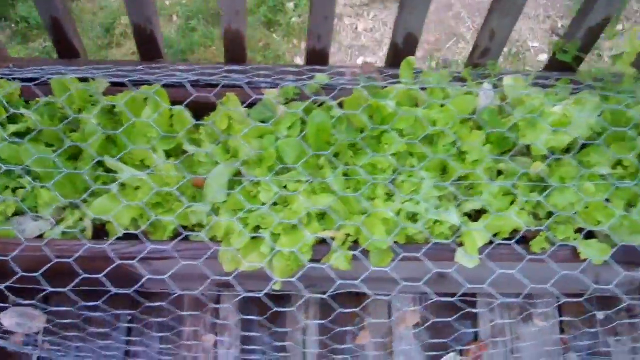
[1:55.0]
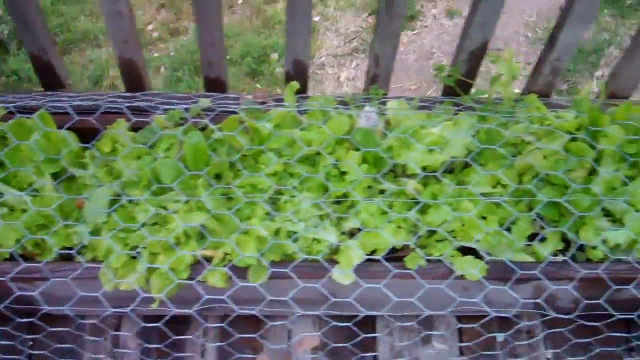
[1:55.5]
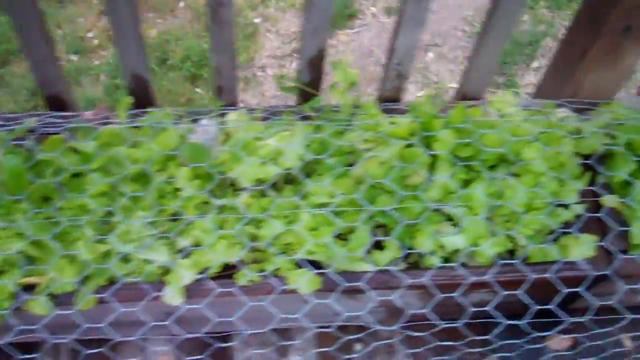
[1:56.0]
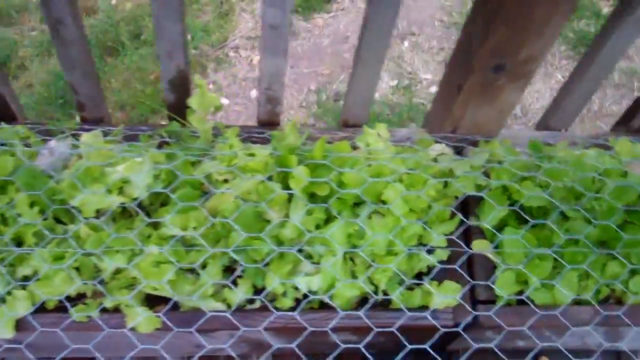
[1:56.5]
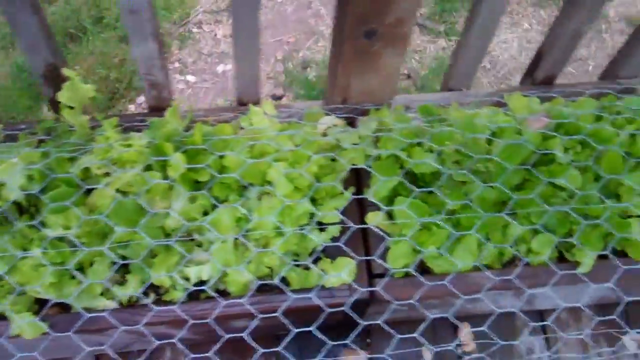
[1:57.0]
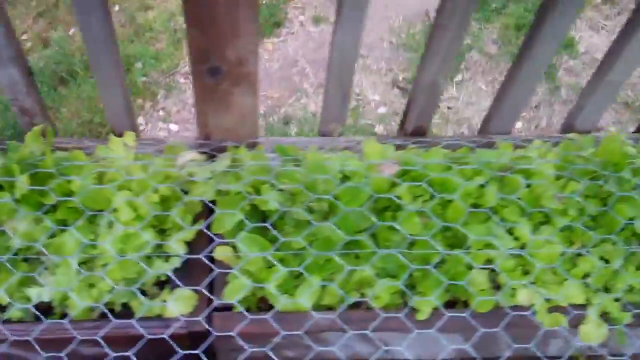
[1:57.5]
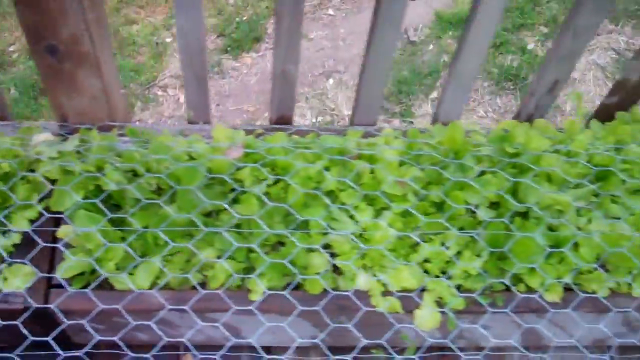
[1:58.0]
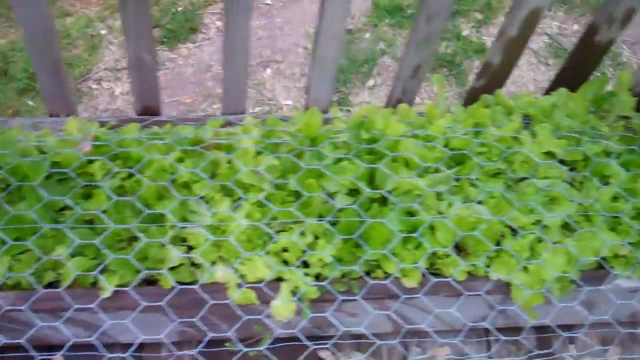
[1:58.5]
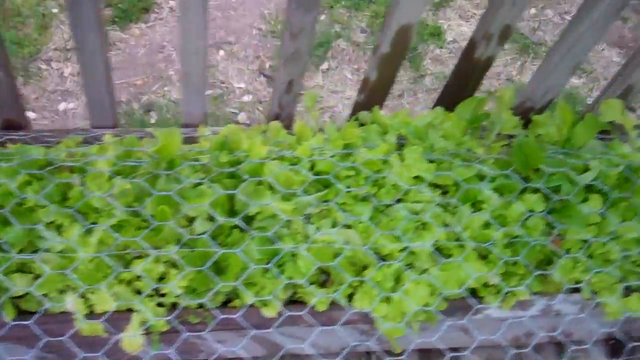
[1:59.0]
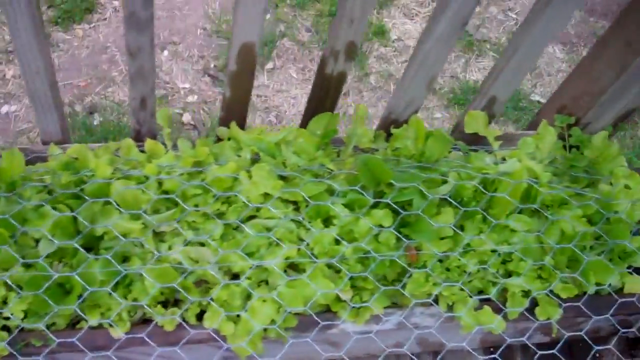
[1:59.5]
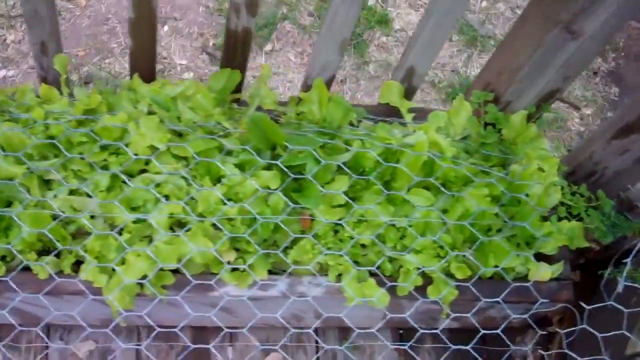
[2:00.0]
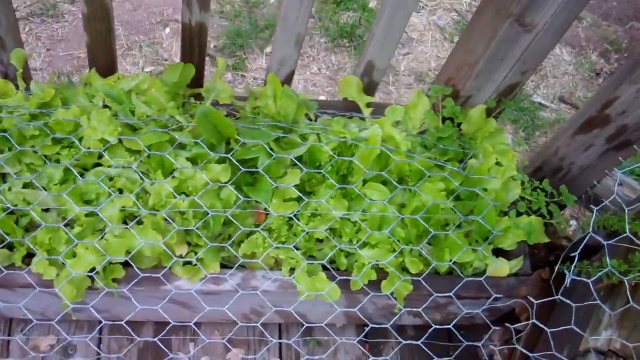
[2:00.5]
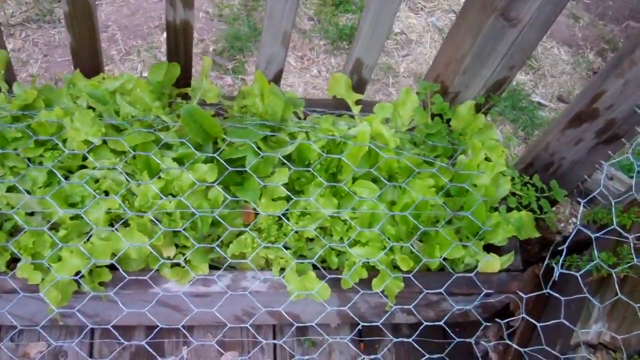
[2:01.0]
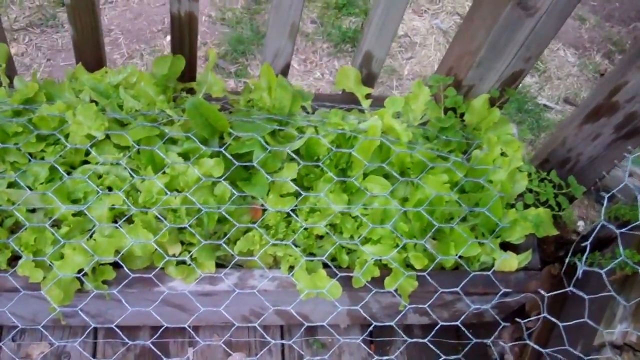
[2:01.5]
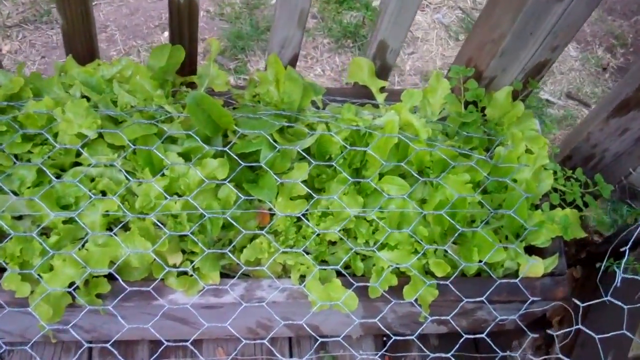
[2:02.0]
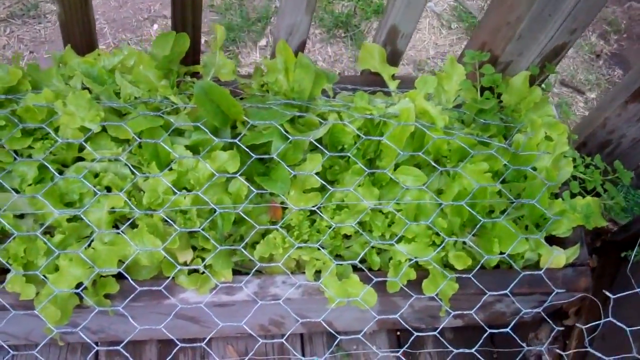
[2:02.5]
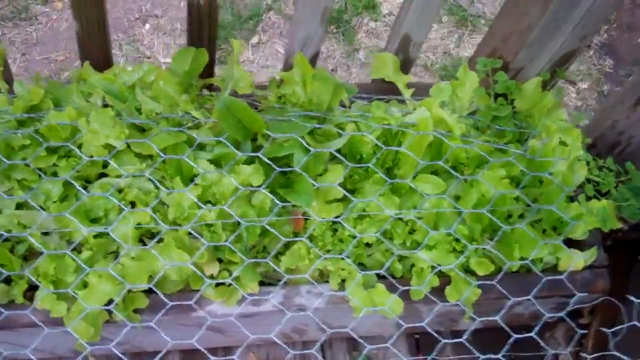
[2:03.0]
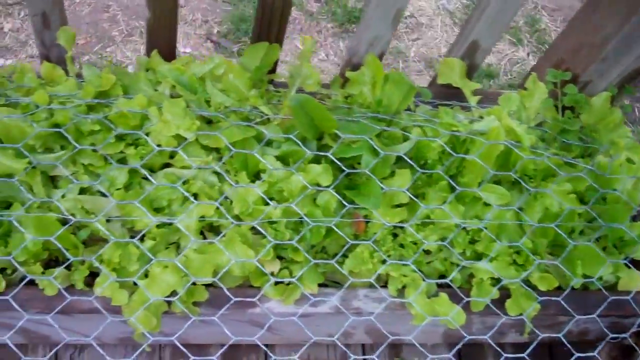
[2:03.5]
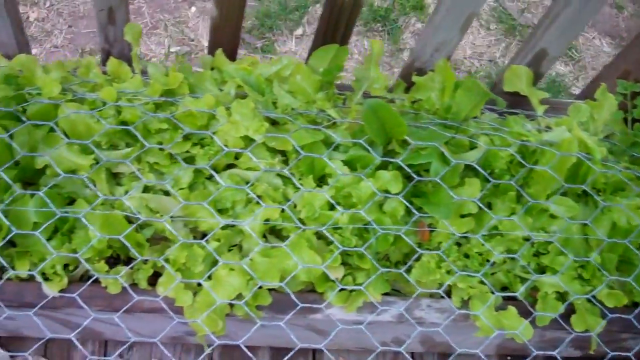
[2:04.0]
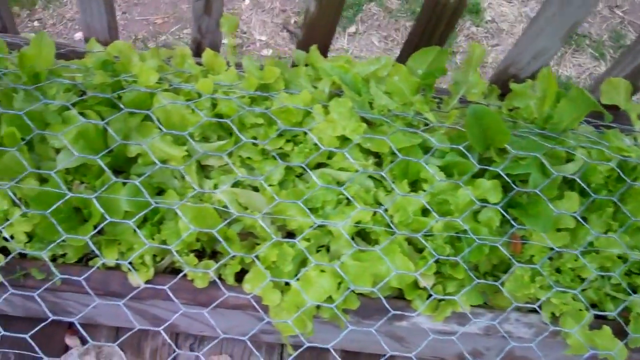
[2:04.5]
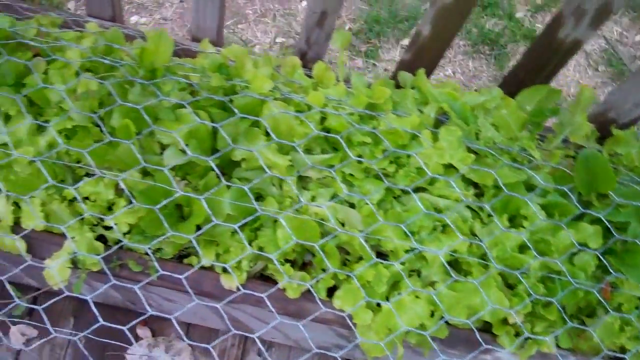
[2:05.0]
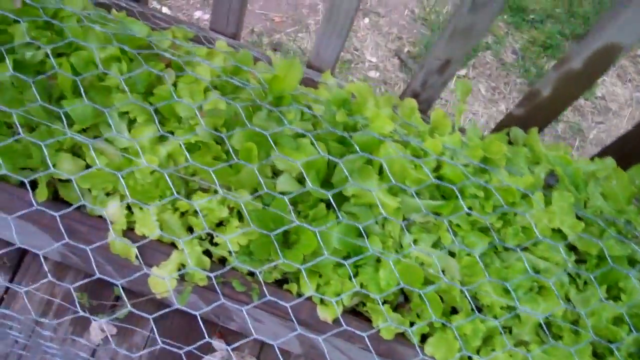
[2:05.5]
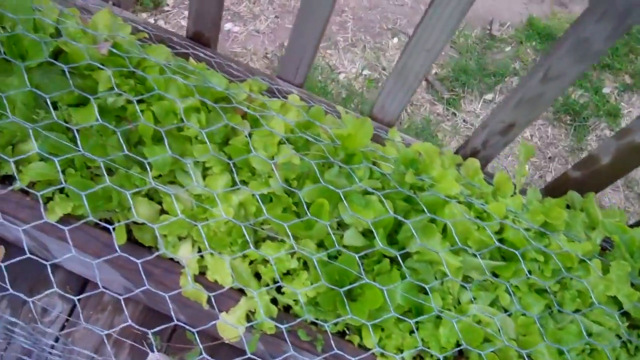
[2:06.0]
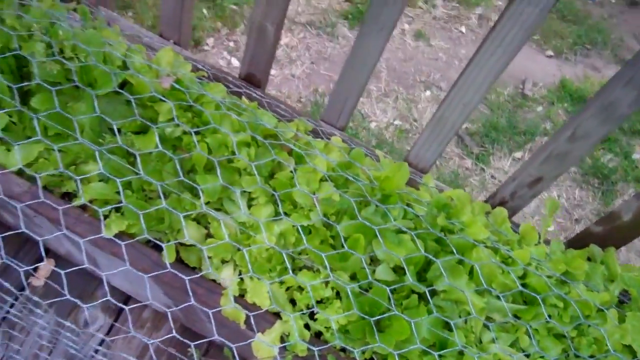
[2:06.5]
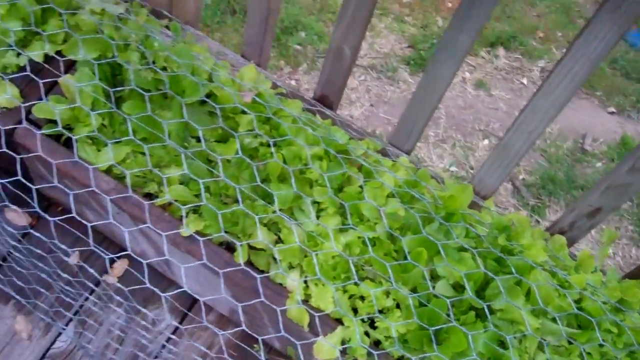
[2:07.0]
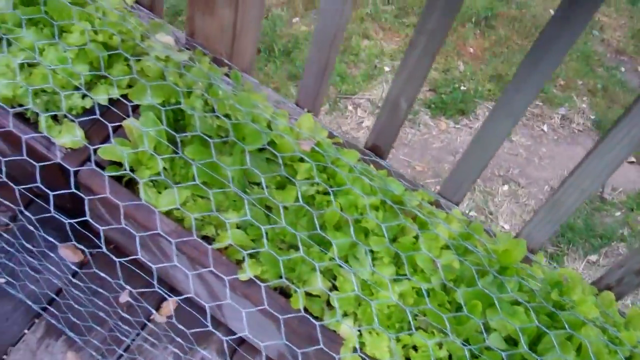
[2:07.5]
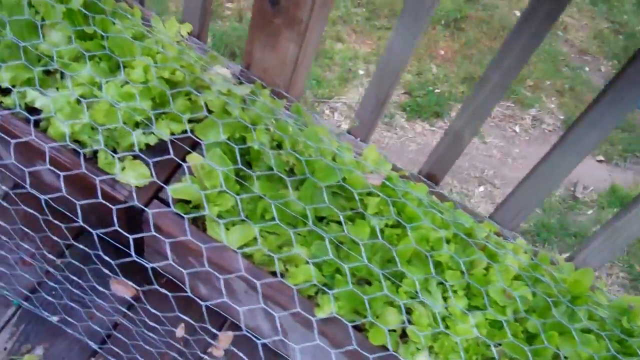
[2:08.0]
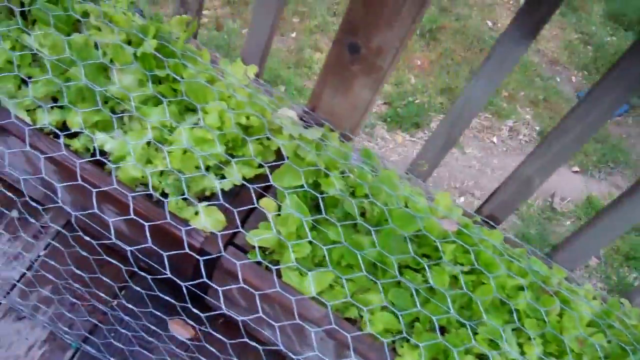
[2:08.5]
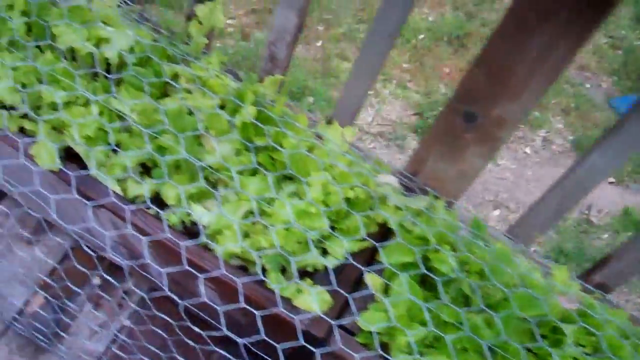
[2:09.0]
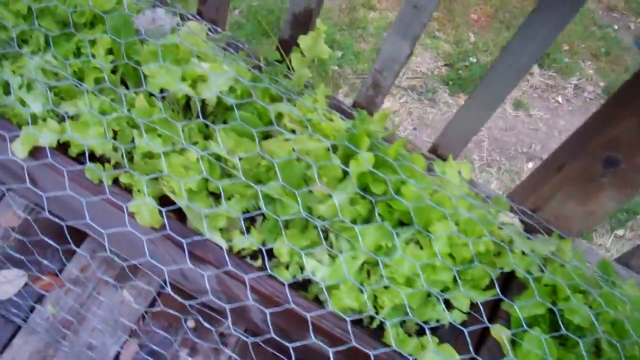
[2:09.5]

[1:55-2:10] The man continues to pan the camera to the right, showing two planters' worth of vegetables covered by a rectangular wire mesh box. He pans over the planted vegetables, then aims the camera a bit toward the left and goes back over them. They all seem to be doing quite well. The wire mesh has a hexagon-like pattern, and some of the leaves are growing through its openings.